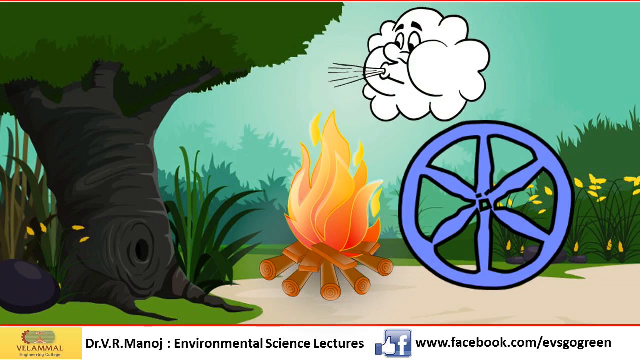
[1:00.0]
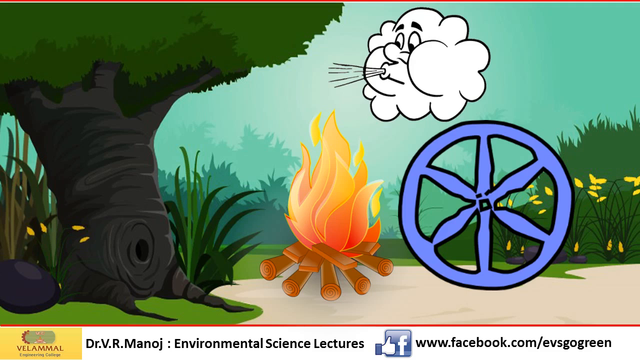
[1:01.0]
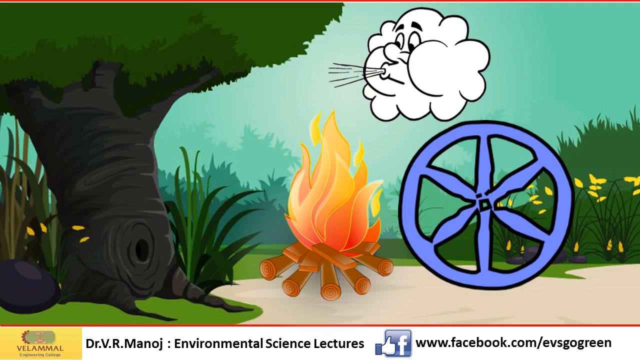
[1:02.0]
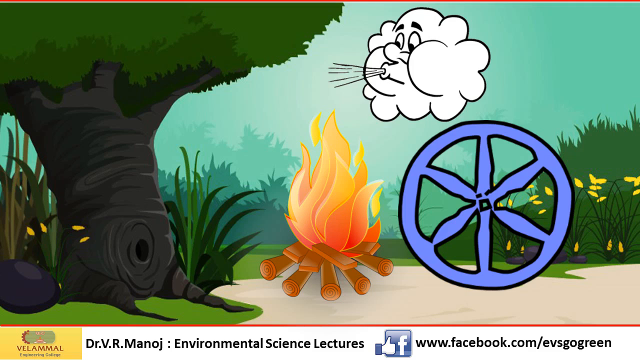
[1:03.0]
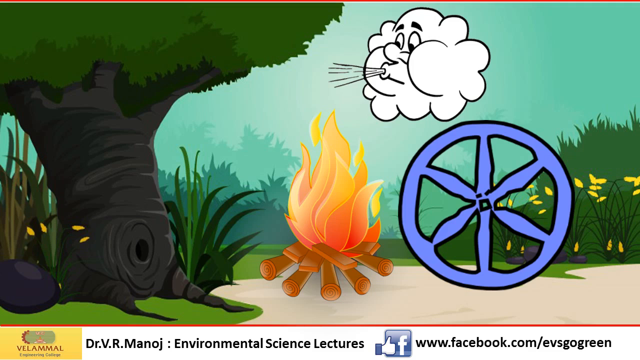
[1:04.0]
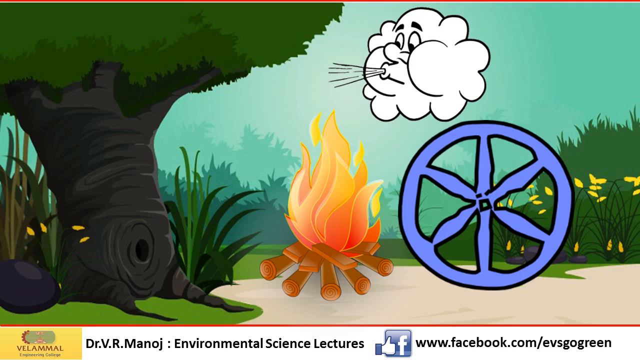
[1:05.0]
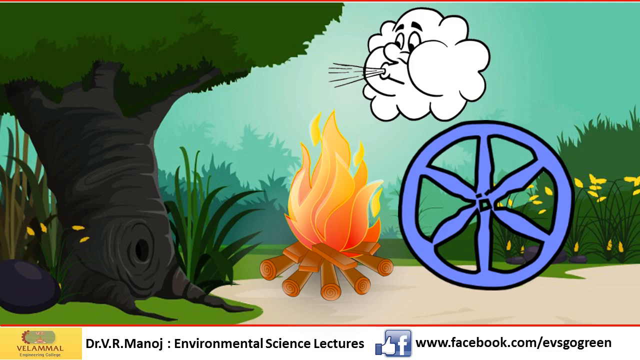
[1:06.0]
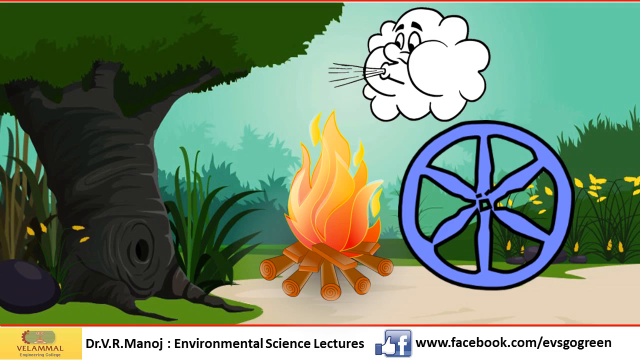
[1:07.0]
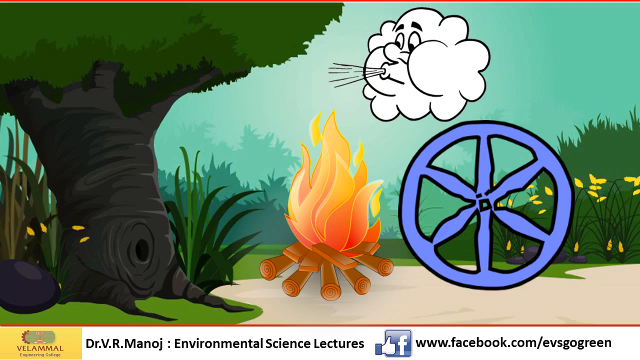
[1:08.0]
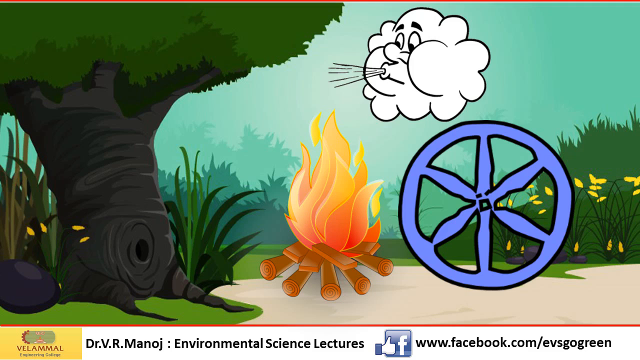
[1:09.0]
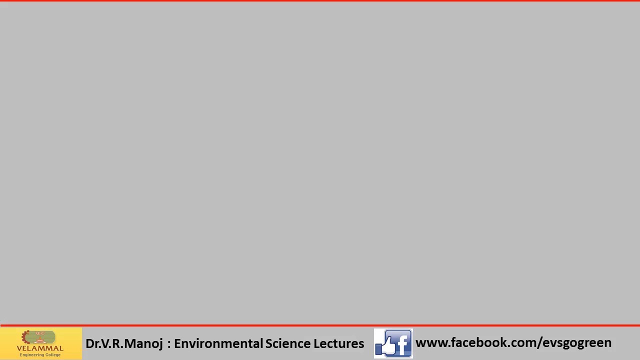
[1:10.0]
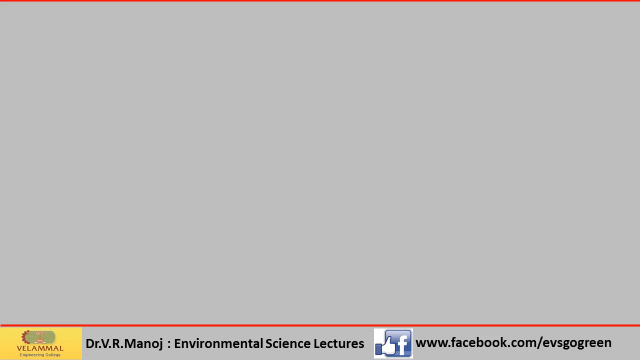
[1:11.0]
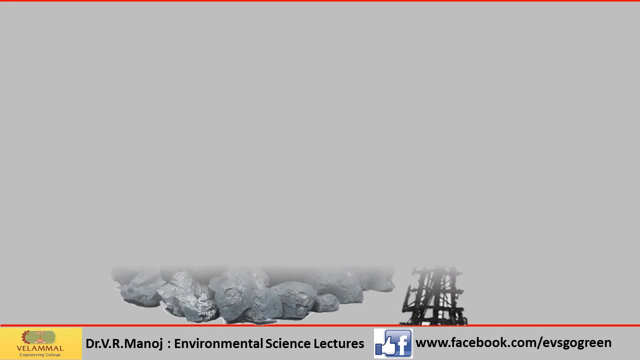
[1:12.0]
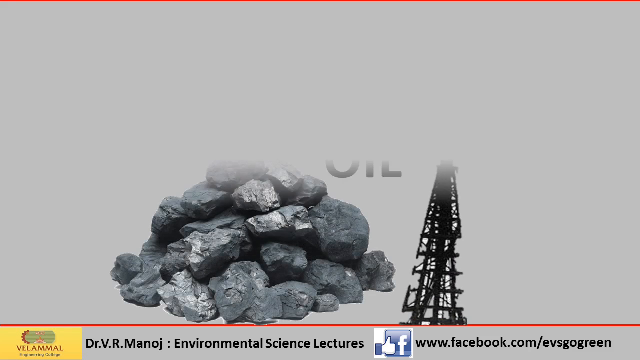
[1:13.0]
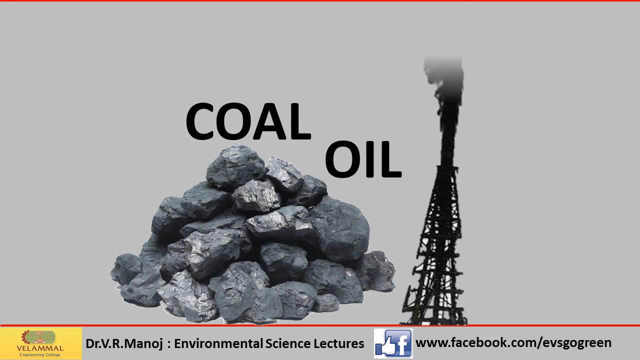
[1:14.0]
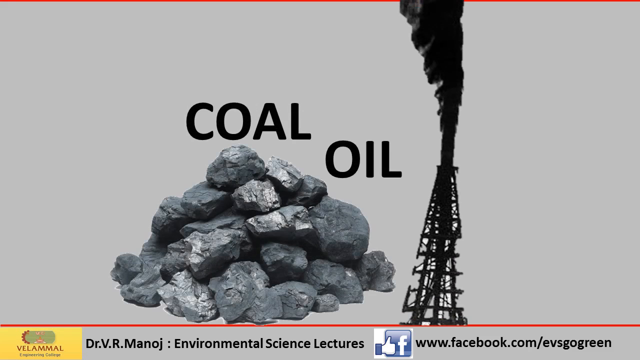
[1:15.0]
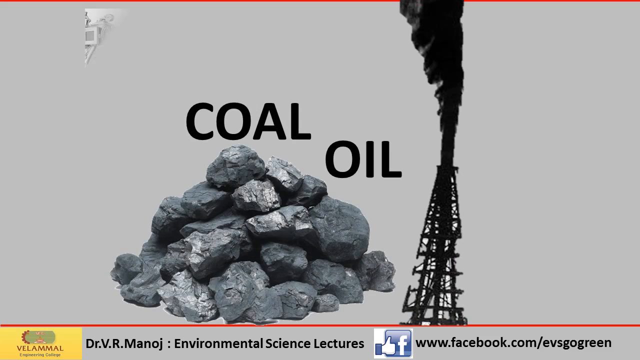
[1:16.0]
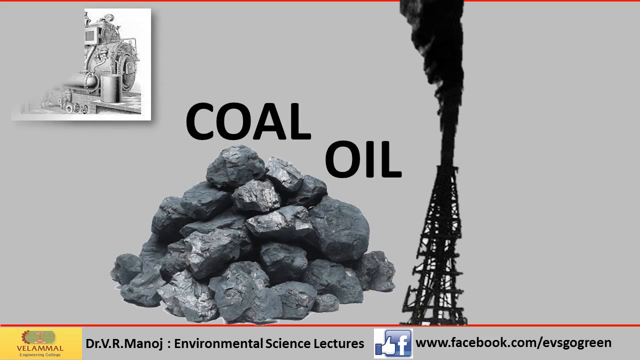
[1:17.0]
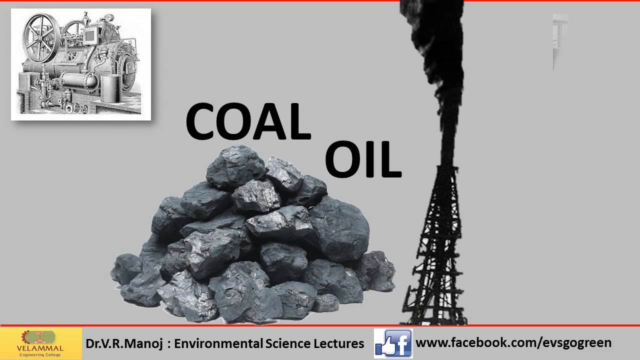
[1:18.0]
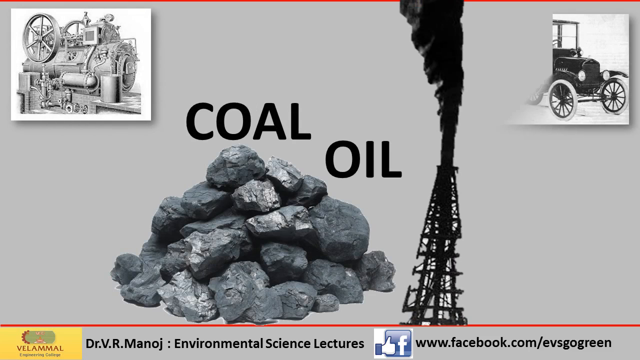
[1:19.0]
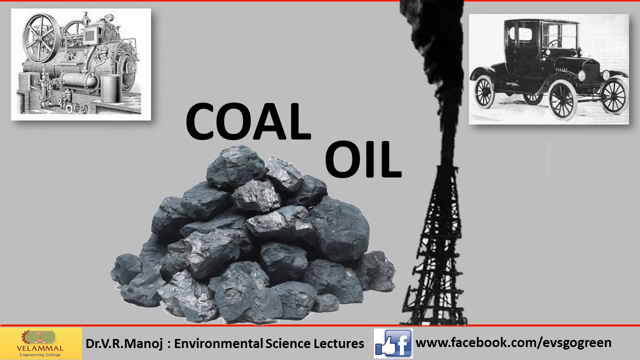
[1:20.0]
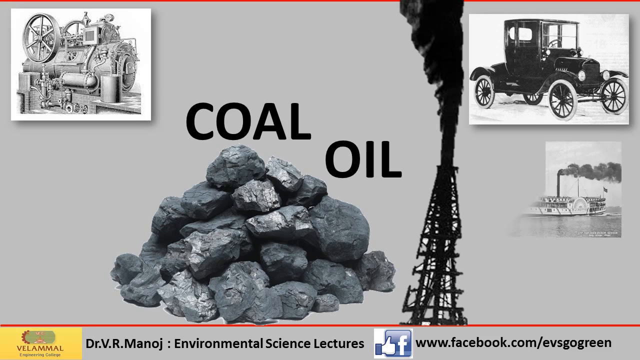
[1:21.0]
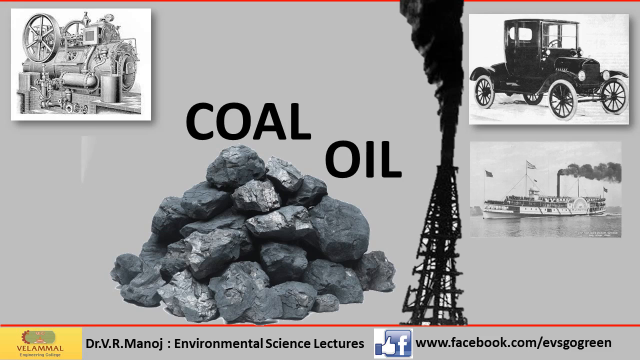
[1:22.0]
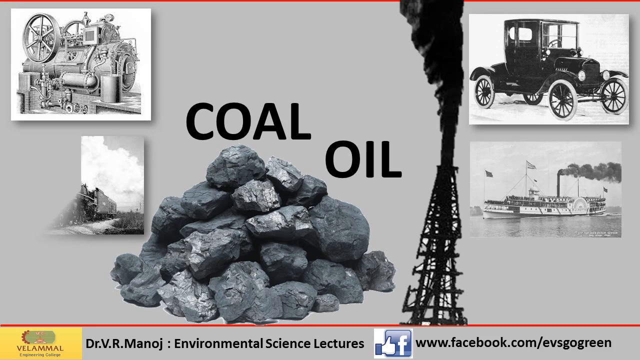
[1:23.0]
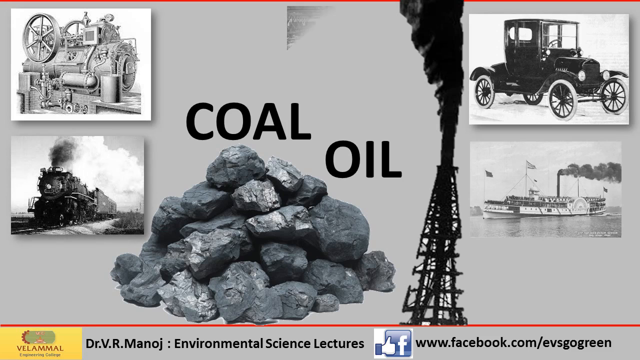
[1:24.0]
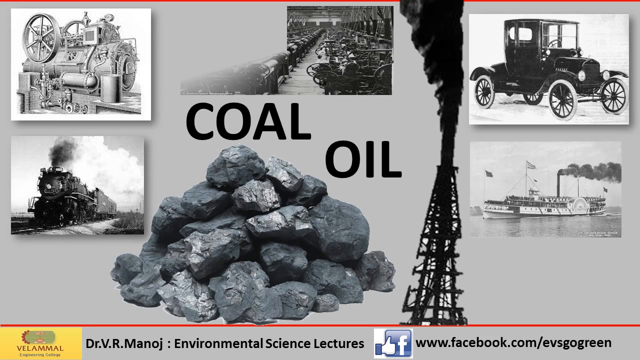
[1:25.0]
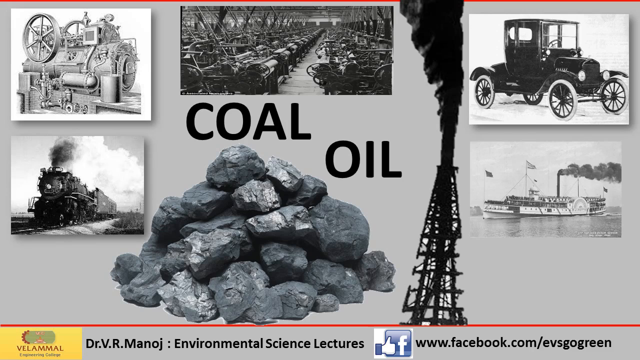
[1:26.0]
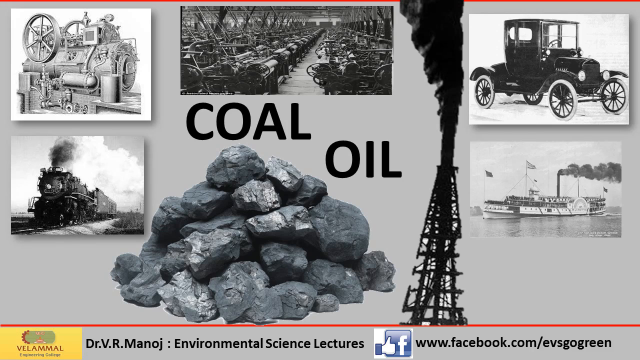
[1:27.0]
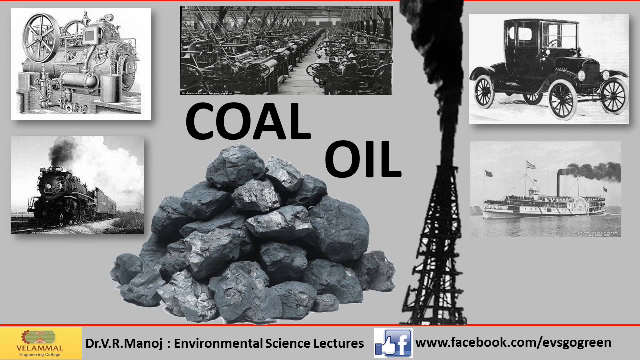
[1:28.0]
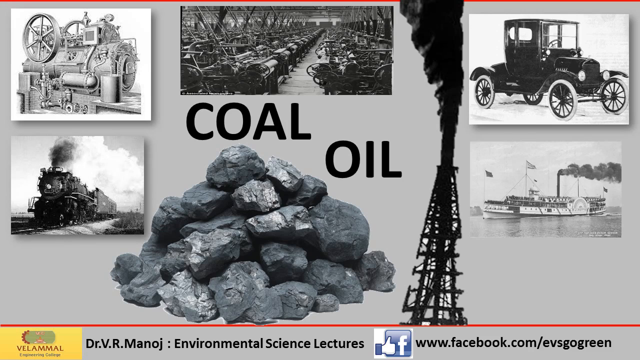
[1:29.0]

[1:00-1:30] The cartoon continues in an environmental science lecture, showing the evolution of man and nature: the fire created in caveman times, then the wheel, which appears in the lower right of the screen, against the same background. The screen then changes, and rising up from the bottom are large chunks of coal on the left with the word "coal" in black text. To the right is an oil well with a black tower, and the word "oil" to its left in bold black capital letters. A black and white illustration of a train pops up in the upper left corner, followed by a black and white illustration of one of the original cars.